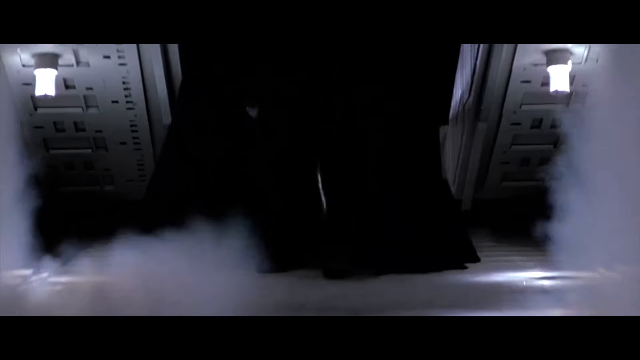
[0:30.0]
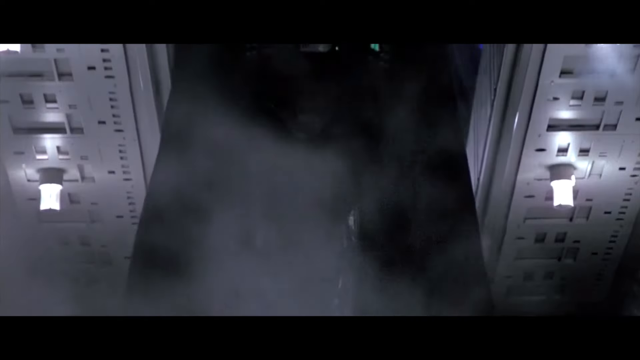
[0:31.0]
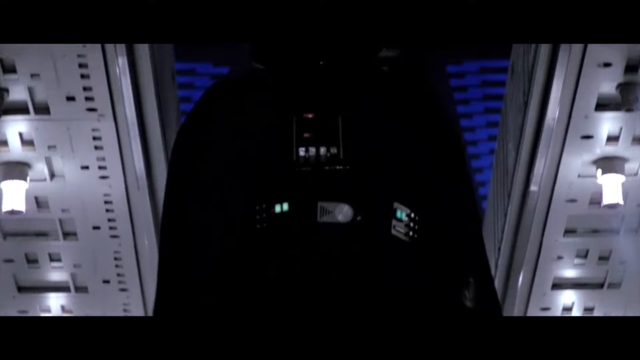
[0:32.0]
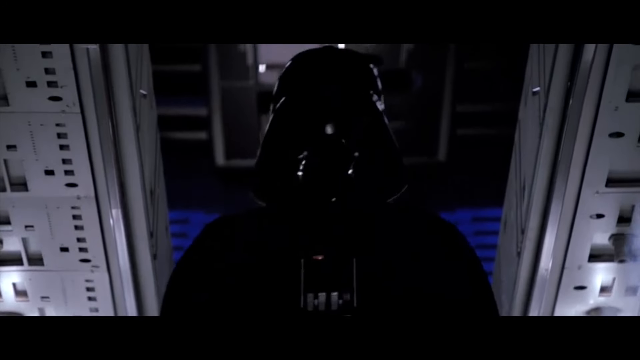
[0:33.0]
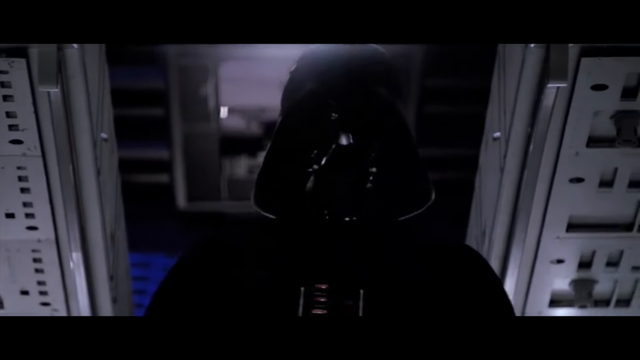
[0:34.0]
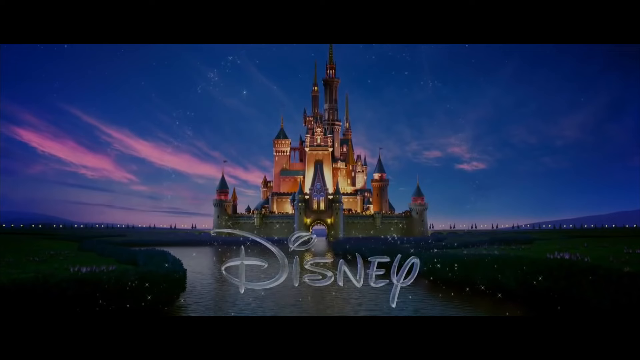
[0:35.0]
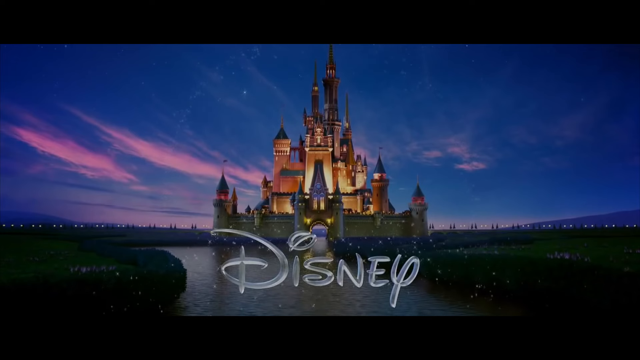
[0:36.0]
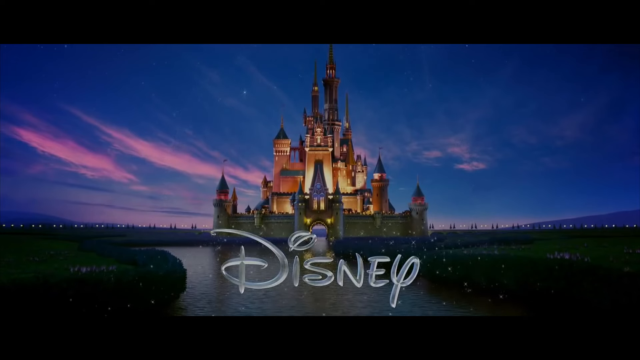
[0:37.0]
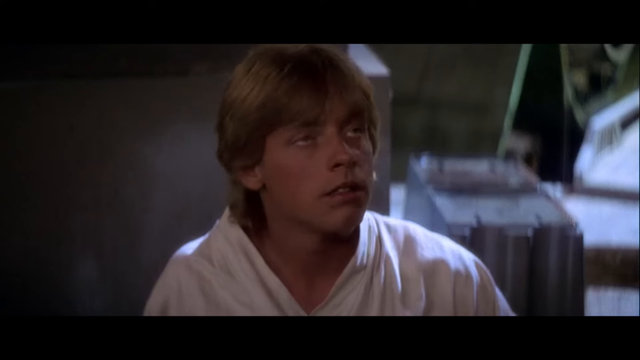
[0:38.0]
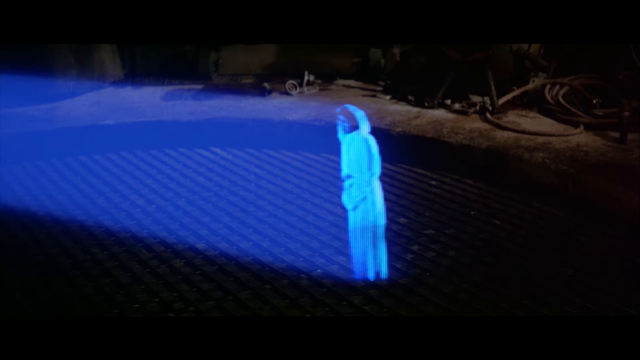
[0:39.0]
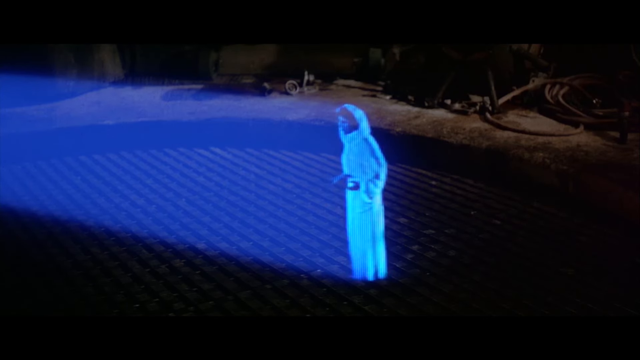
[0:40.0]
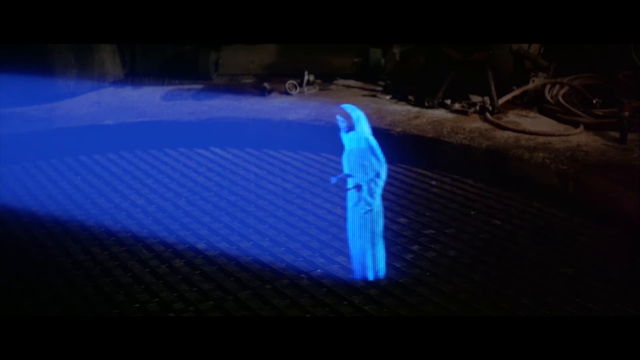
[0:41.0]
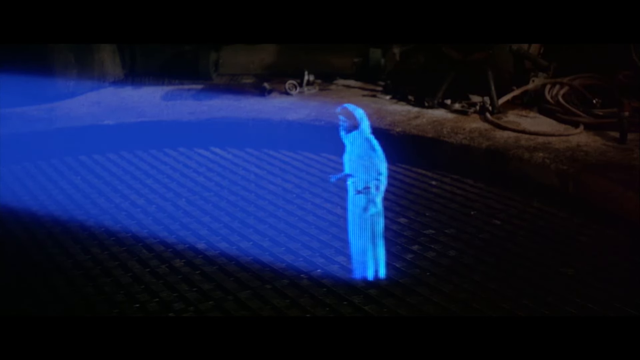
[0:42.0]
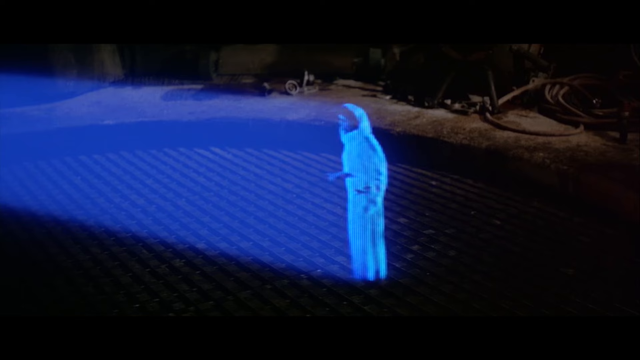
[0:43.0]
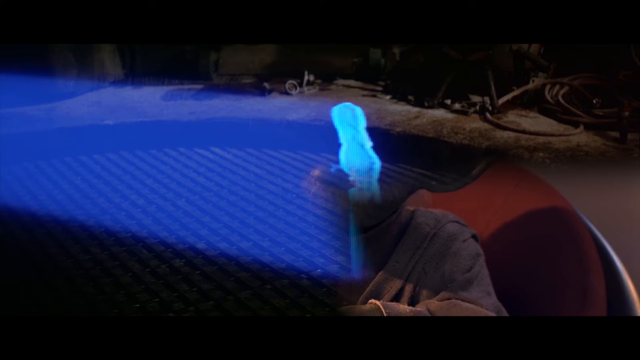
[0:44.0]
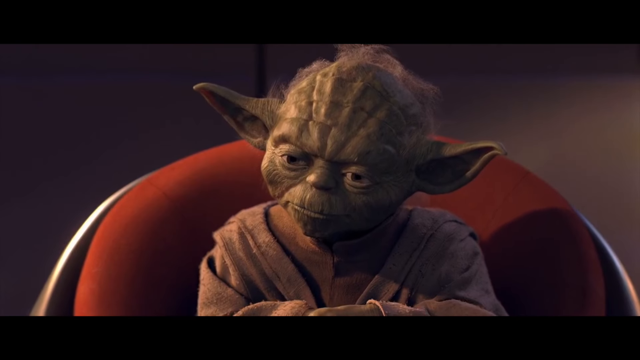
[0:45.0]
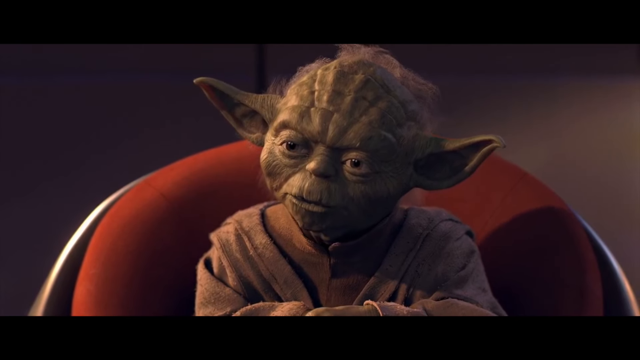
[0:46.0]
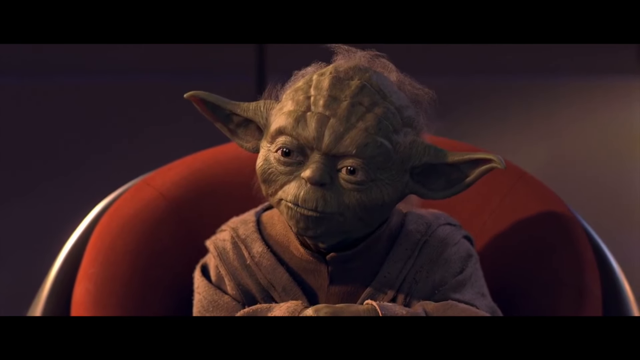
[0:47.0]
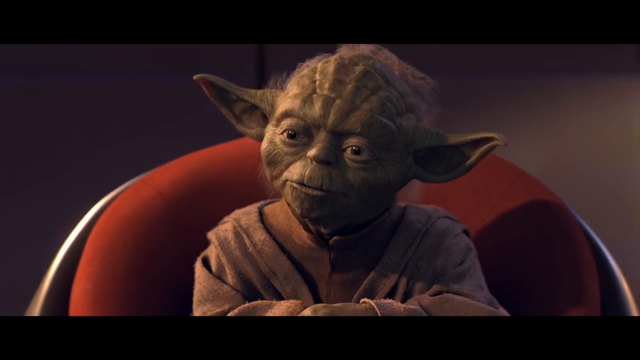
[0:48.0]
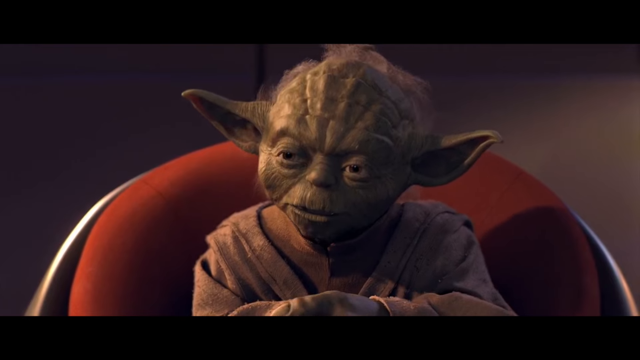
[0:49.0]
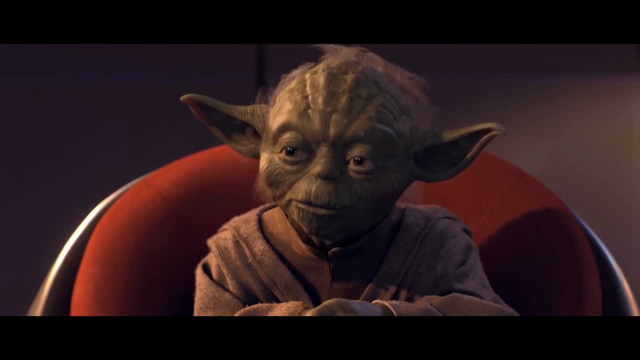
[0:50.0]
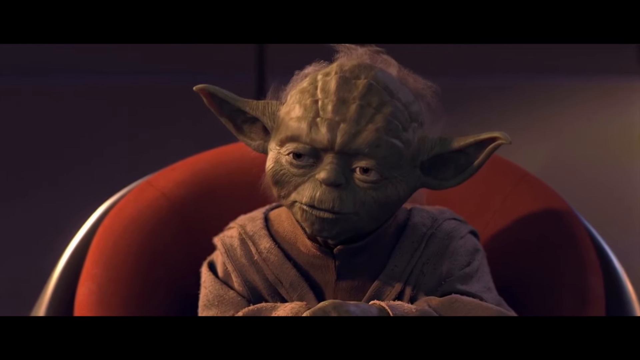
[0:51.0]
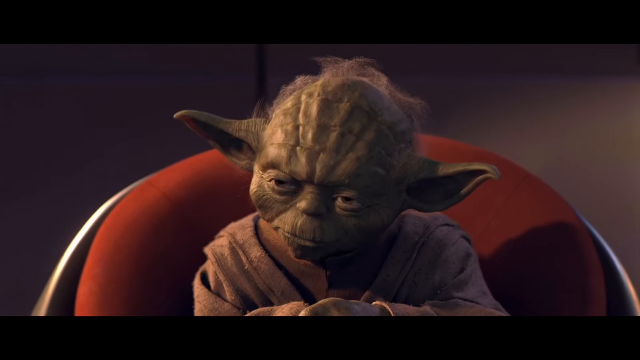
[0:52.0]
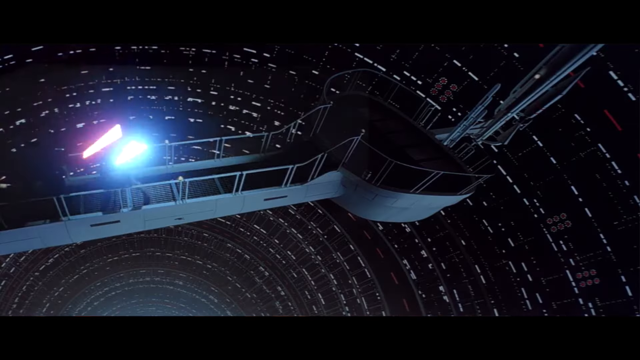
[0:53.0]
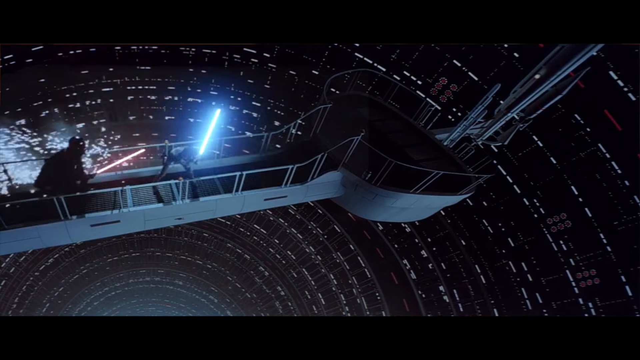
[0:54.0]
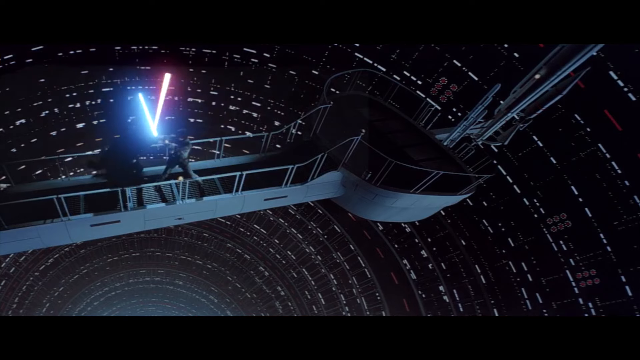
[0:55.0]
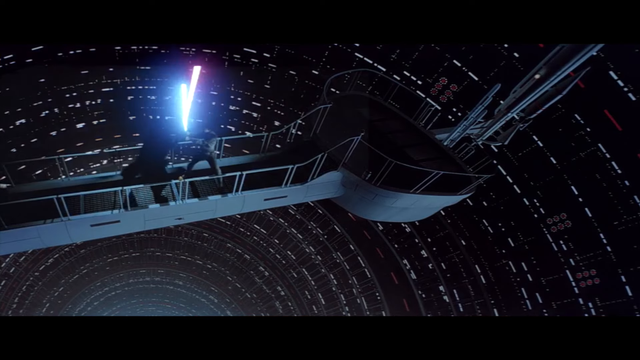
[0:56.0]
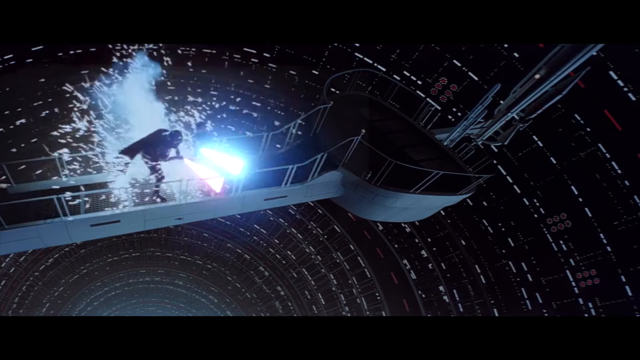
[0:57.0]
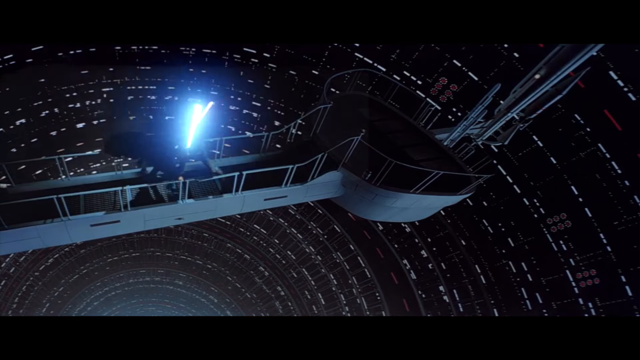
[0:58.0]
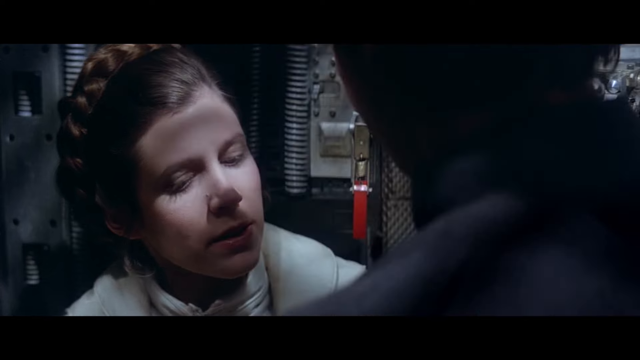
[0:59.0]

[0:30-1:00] The background seems to be outer space. A spaceship moves through space toward planet Earth and is being shot at; it looks like a movie setting of some sort. The view goes into the spaceship, and someone comes out. The title appears to be Star Wars, written in a language other than English. The Disney logo then appears in front of the Disney castle, with a river, grass and a blue sky.